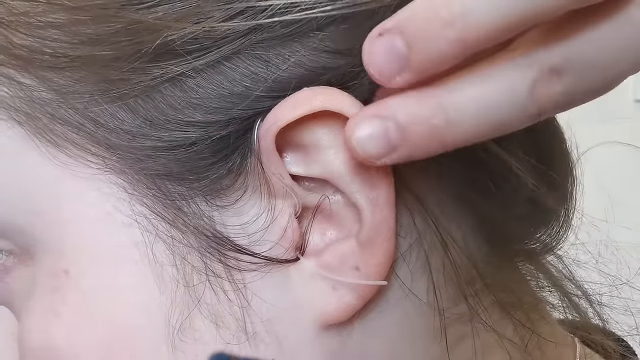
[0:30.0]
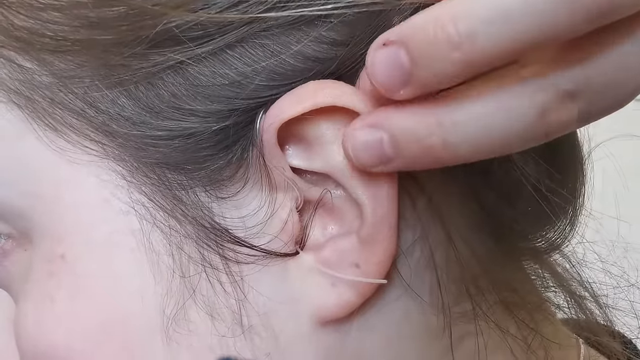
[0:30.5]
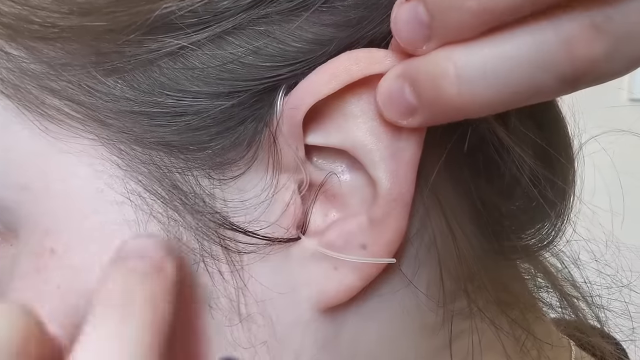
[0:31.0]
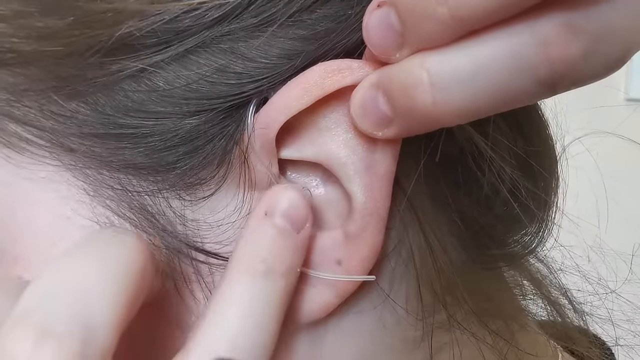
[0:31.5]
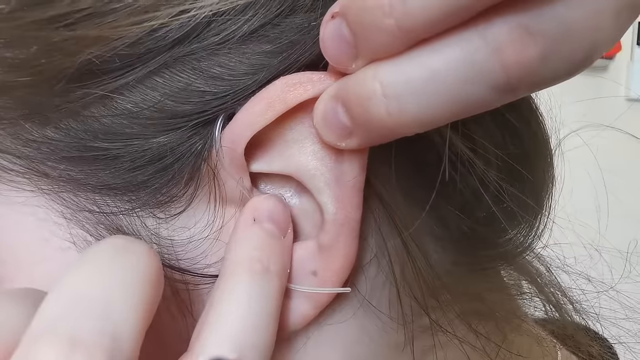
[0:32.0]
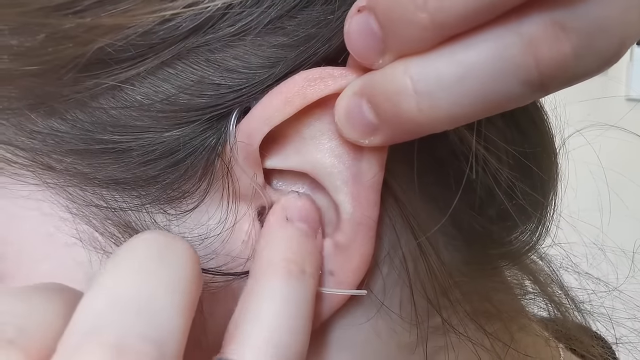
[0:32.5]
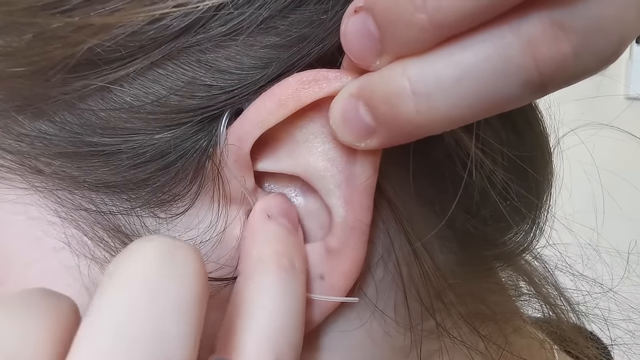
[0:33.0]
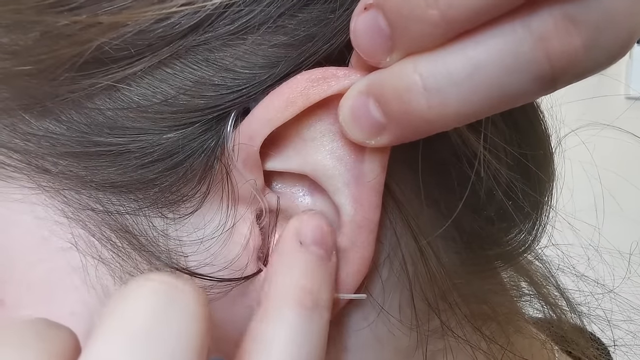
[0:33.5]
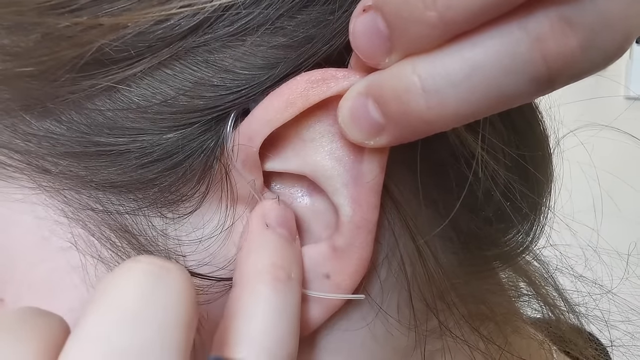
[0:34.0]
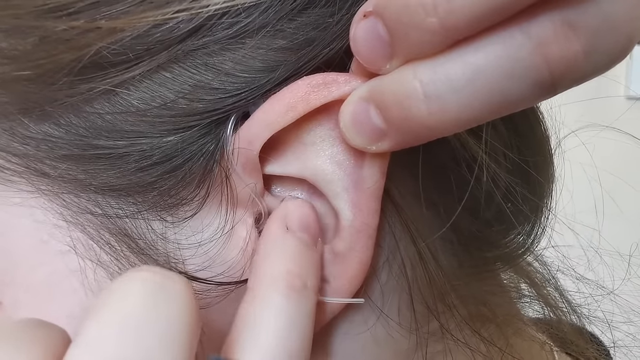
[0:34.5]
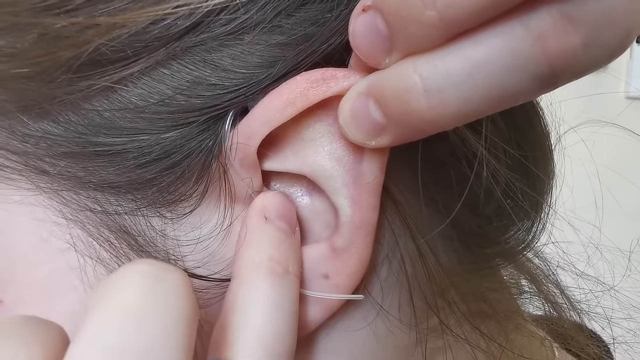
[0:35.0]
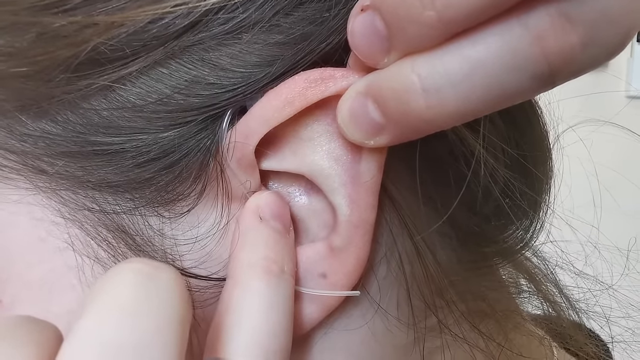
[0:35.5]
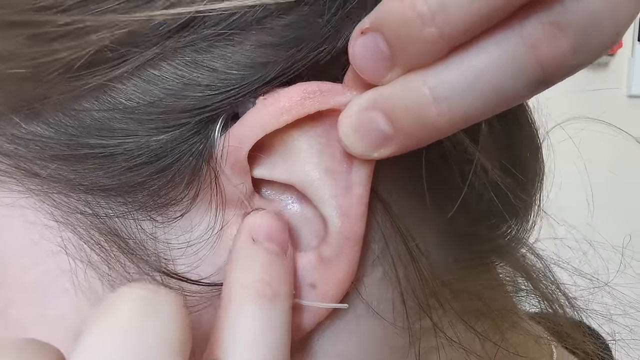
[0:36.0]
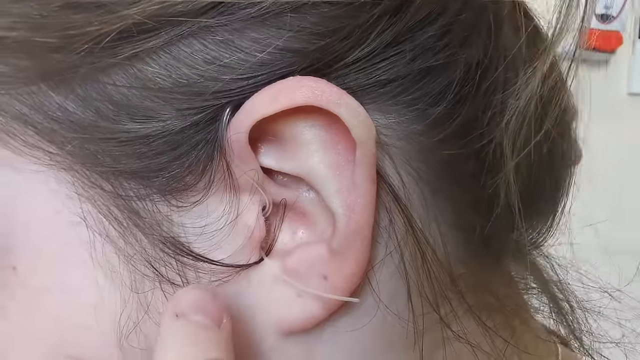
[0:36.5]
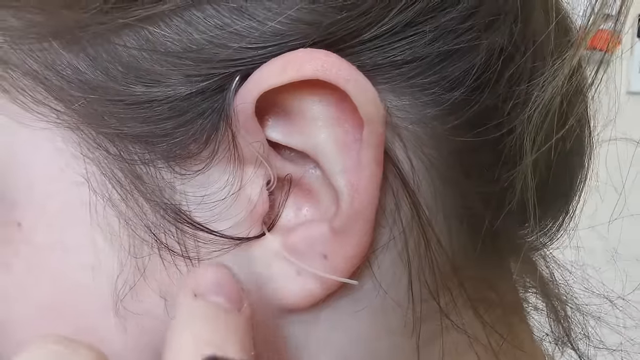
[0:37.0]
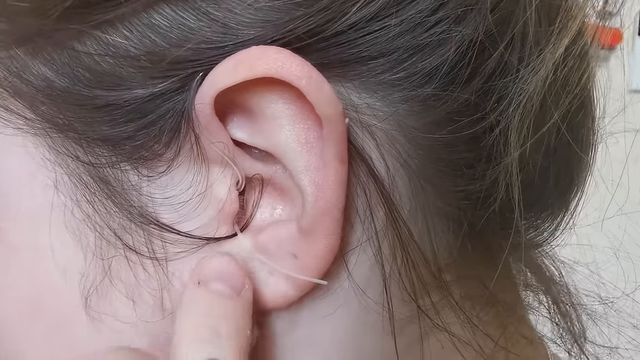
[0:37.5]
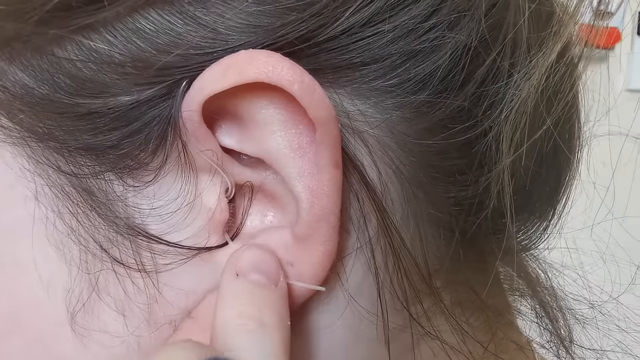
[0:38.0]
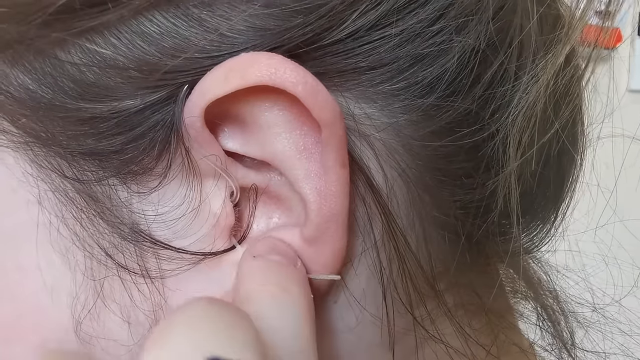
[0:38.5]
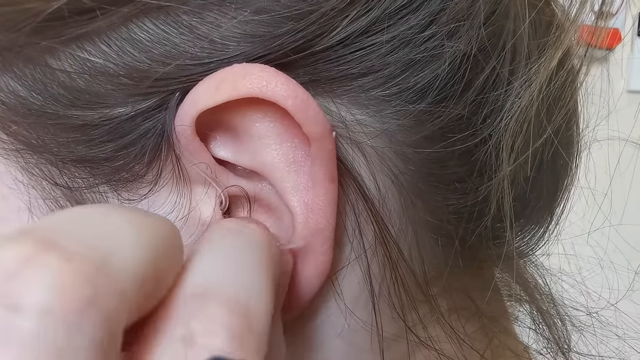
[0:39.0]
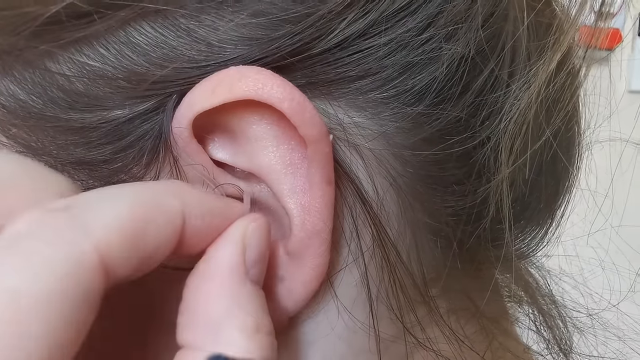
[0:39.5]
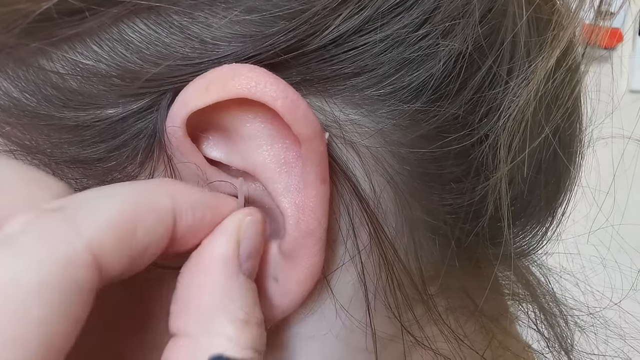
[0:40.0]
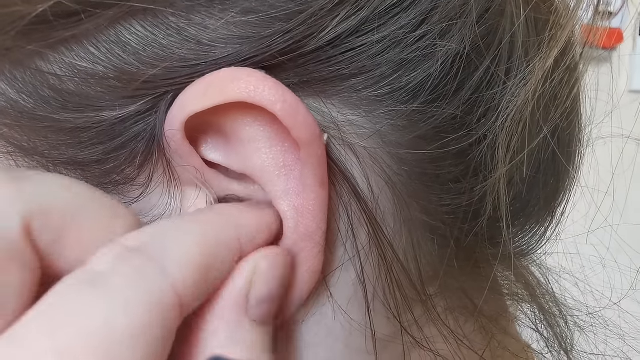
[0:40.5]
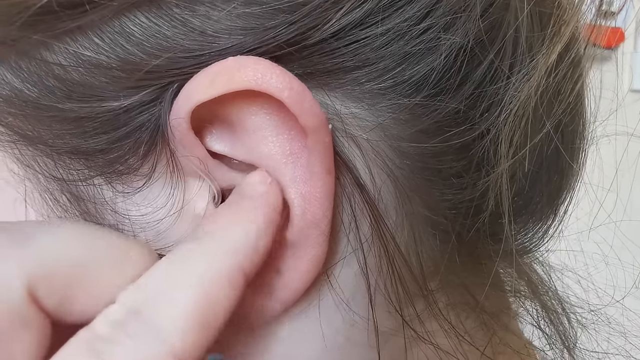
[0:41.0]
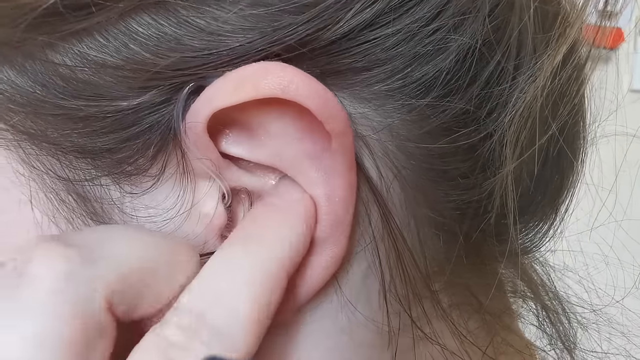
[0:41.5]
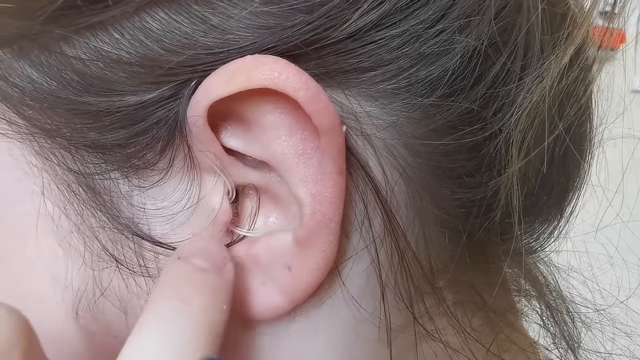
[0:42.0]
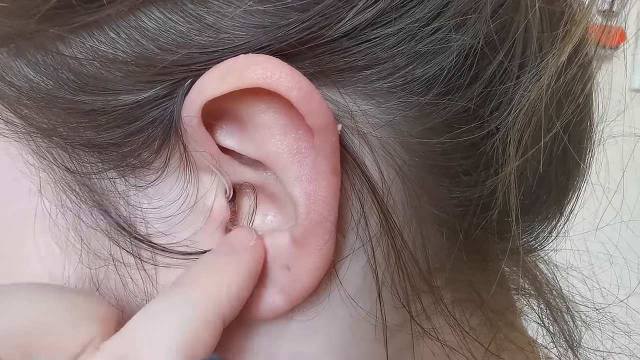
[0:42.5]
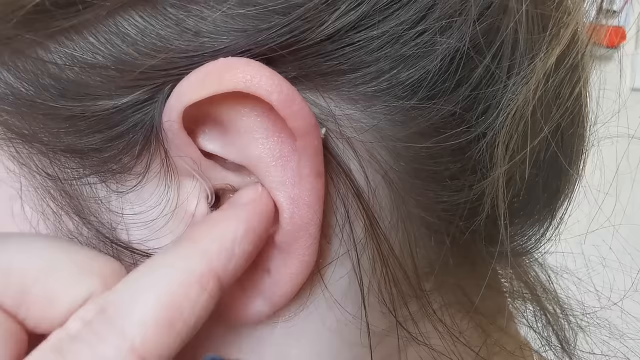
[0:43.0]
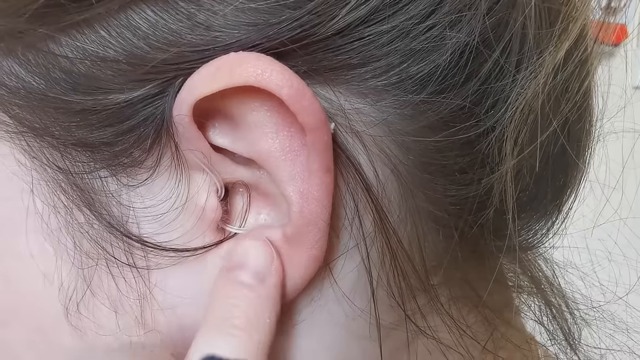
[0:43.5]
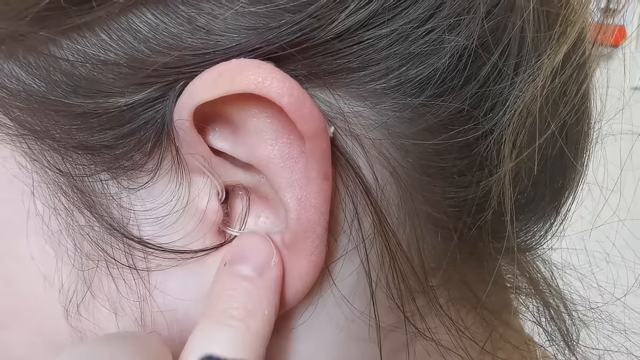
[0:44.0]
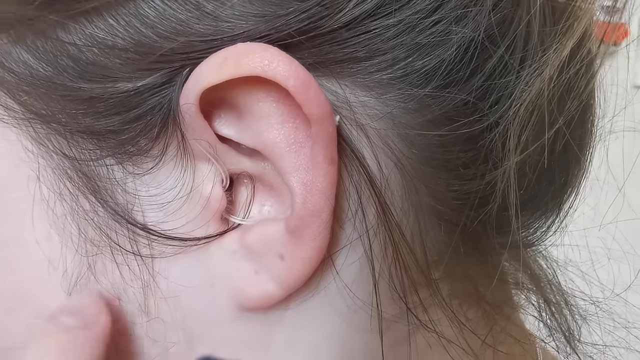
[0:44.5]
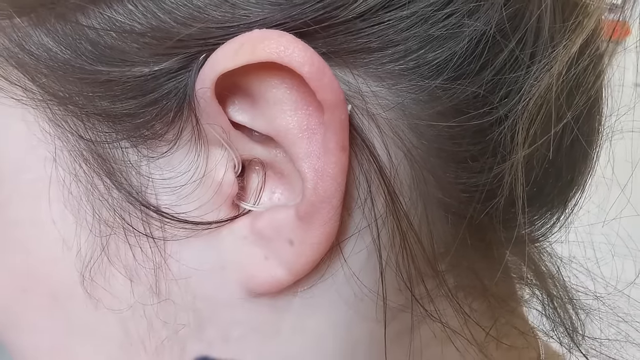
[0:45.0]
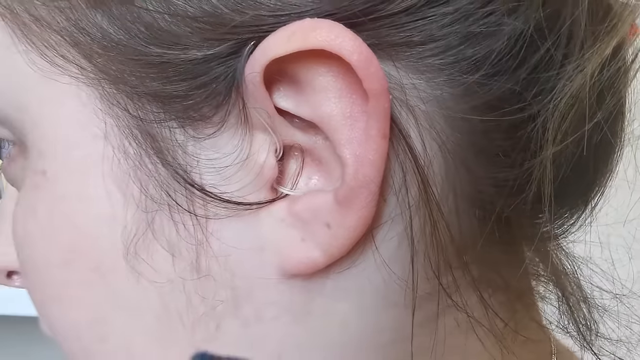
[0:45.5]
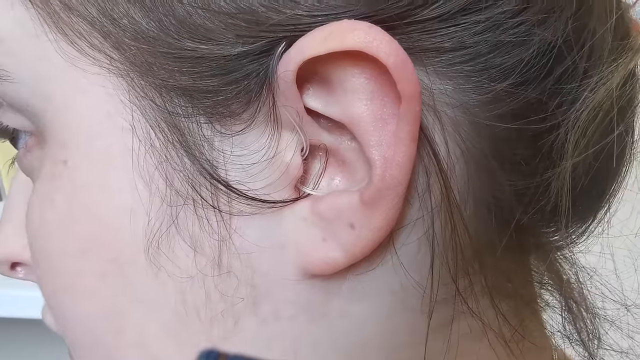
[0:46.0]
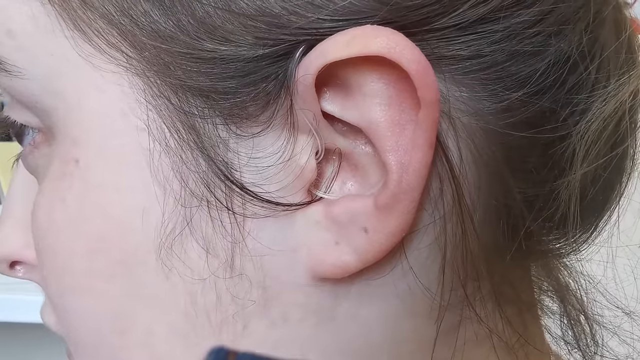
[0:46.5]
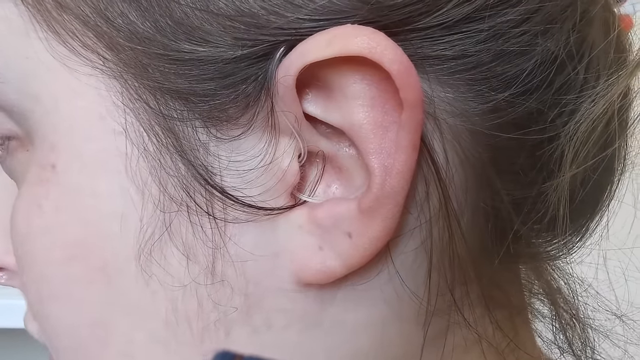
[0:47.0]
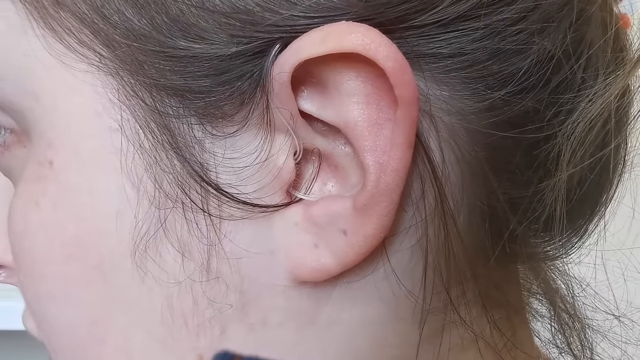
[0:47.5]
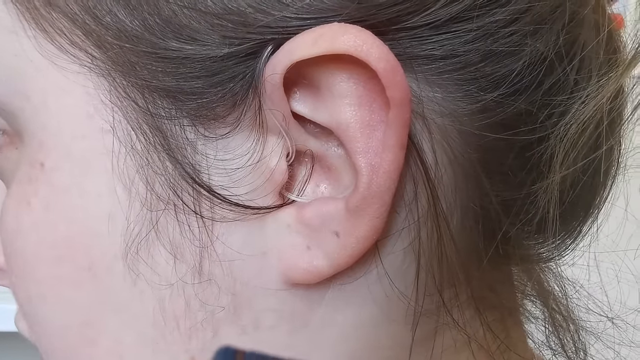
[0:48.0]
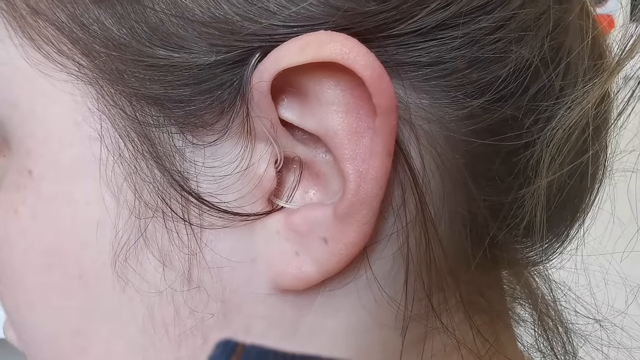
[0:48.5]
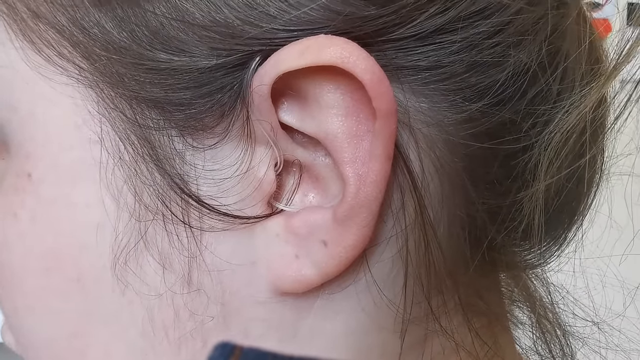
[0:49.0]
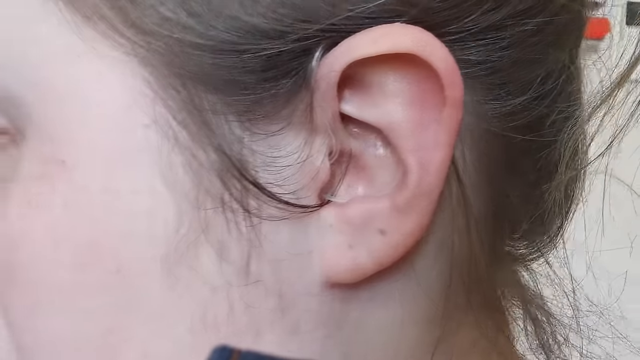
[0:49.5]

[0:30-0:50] A close-up shows a Caucasian person's left ear. The person has sandy brown hair and is wearing a hearing aid. She holds her ear with her right hand, which comes from behind her head, holding the ear flap back, and presses on the piece of the hearing aid that goes inside the ear canal to make sure it is fitted properly. For a brief moment the camera pans and her face is visible; this is probably a woman. She taps down with her fingers so that the tubing suspended from the top of the ear is inserted into her outer ear and is not visible. The video ends with a close-up of half of the person's face, showing just the cheek and a closed eye with eyelashes.